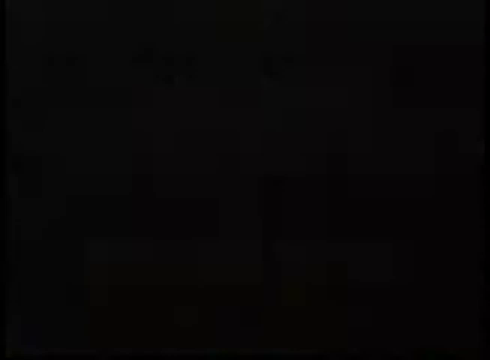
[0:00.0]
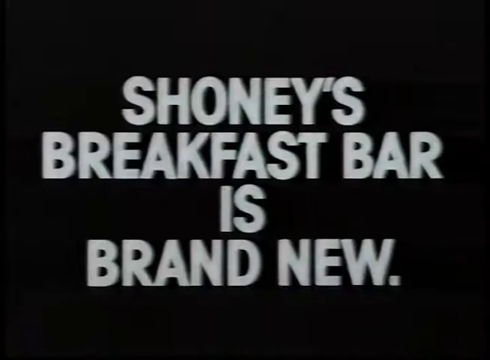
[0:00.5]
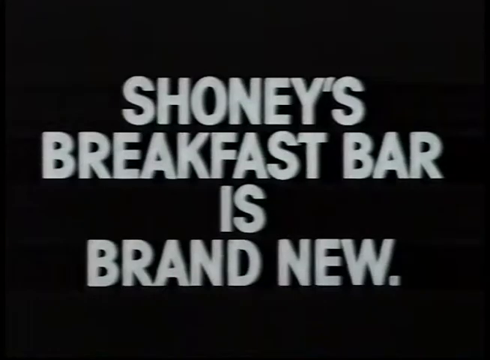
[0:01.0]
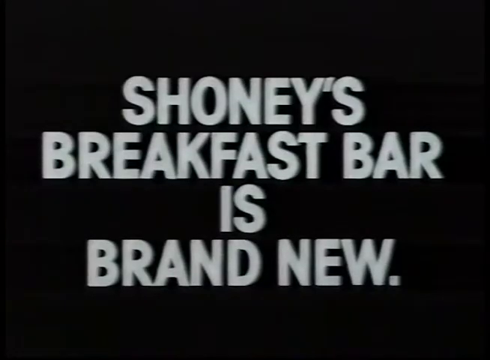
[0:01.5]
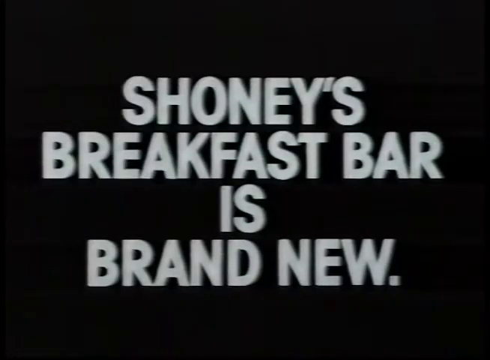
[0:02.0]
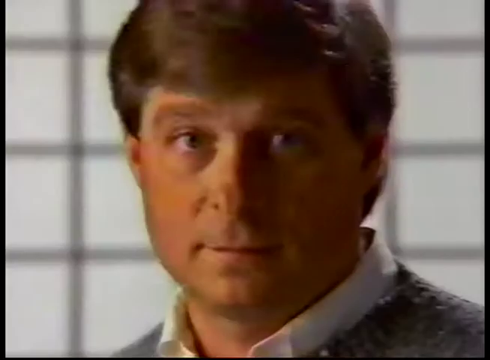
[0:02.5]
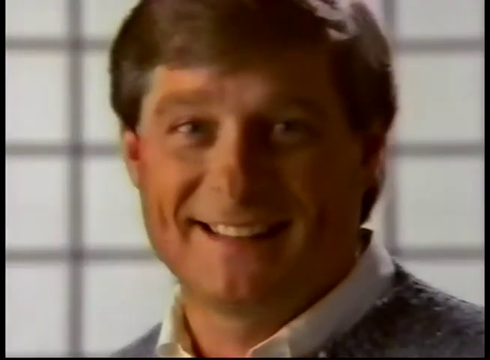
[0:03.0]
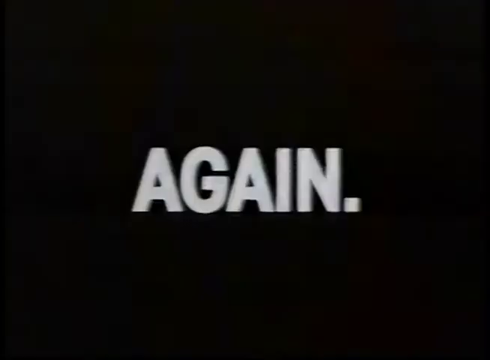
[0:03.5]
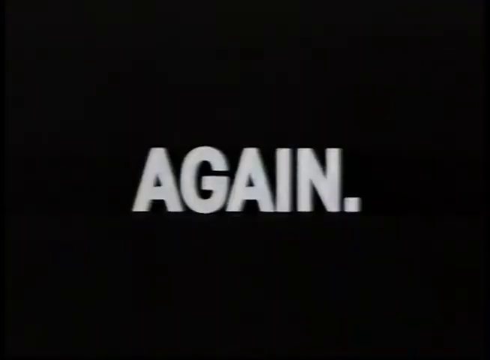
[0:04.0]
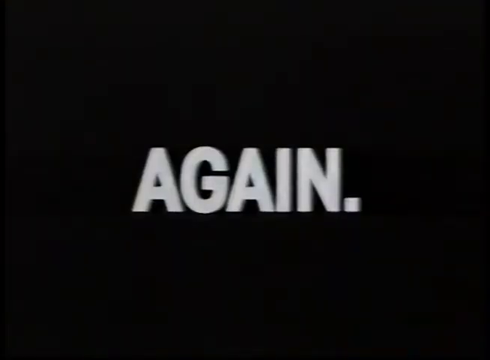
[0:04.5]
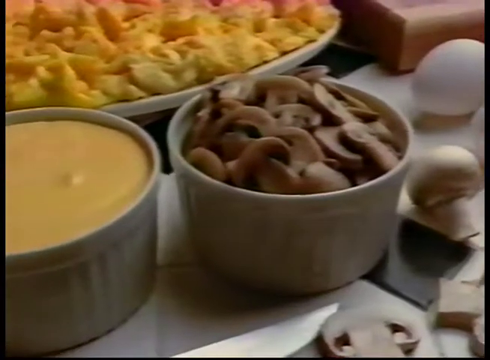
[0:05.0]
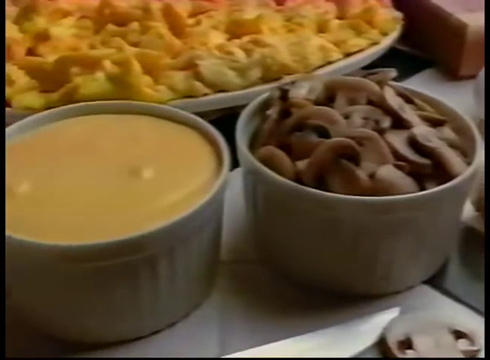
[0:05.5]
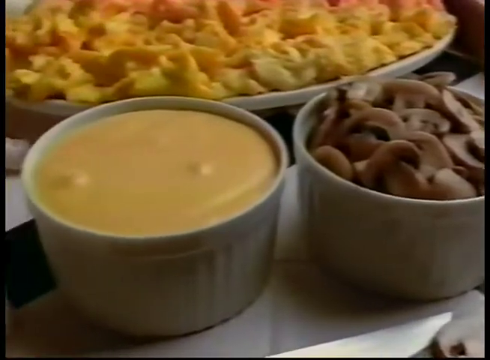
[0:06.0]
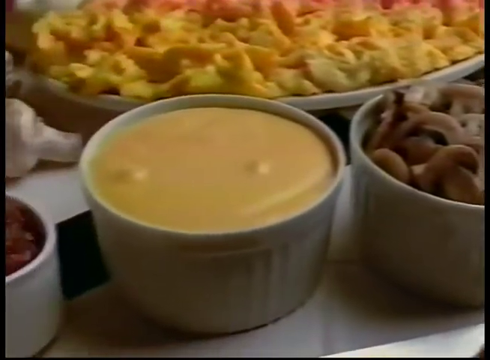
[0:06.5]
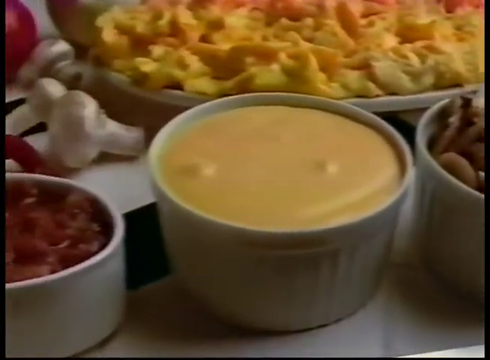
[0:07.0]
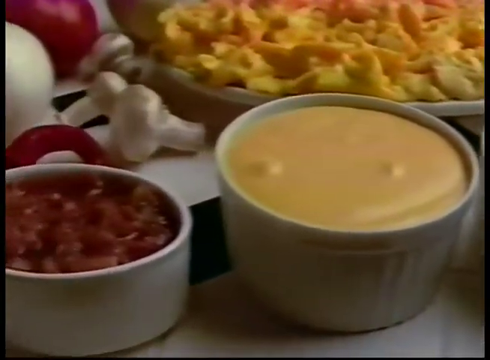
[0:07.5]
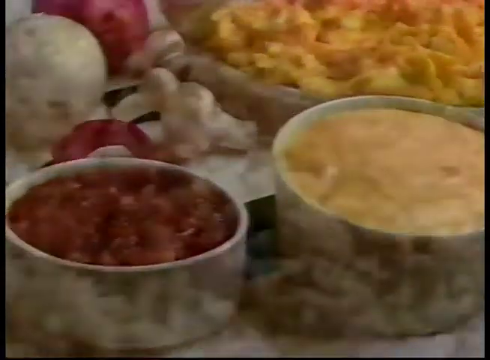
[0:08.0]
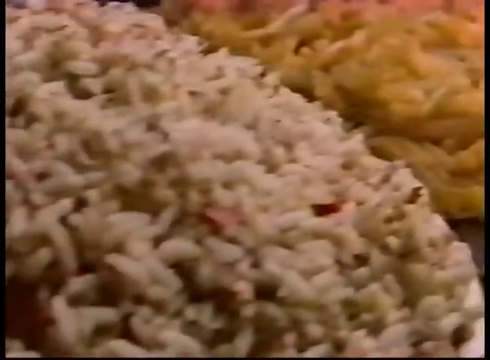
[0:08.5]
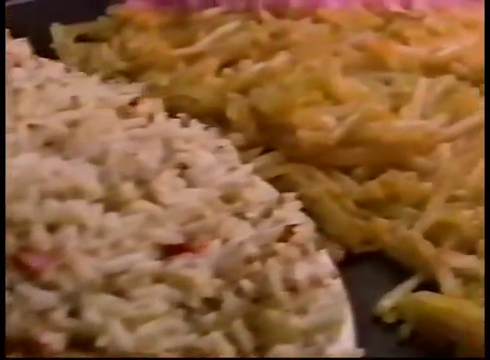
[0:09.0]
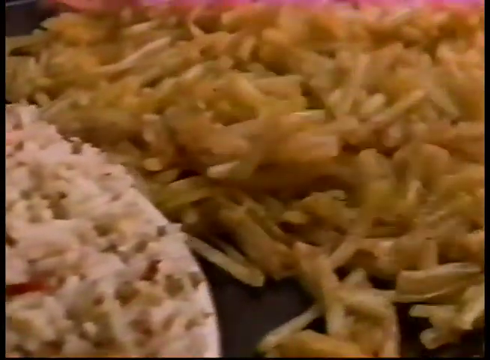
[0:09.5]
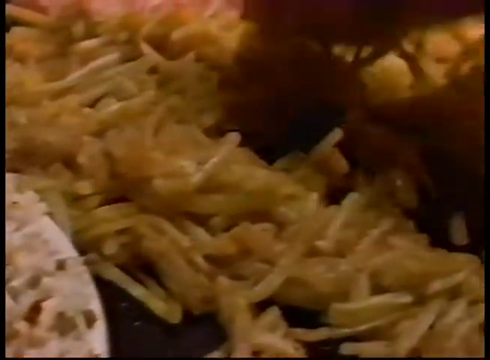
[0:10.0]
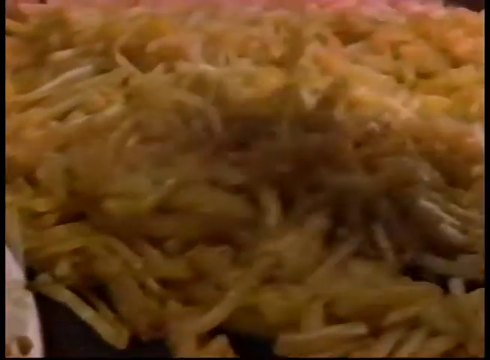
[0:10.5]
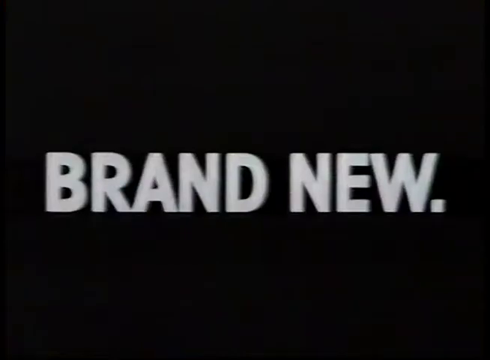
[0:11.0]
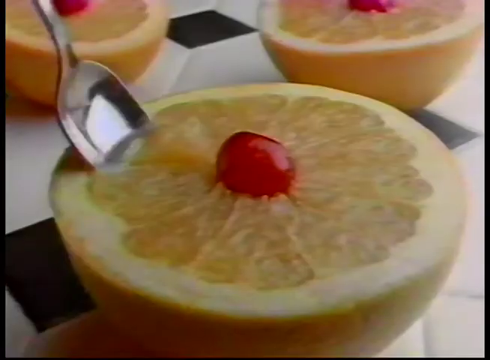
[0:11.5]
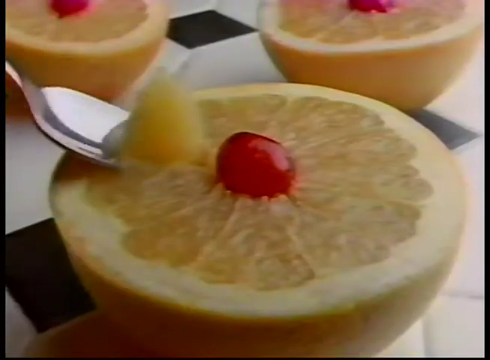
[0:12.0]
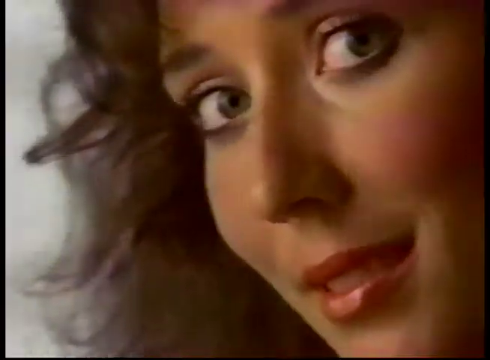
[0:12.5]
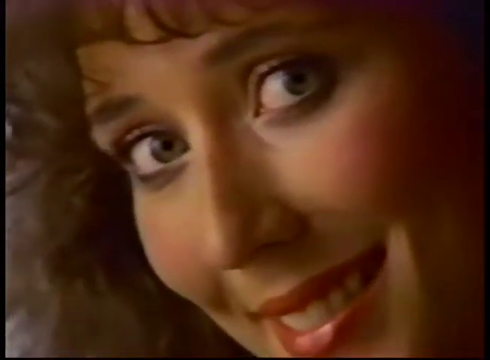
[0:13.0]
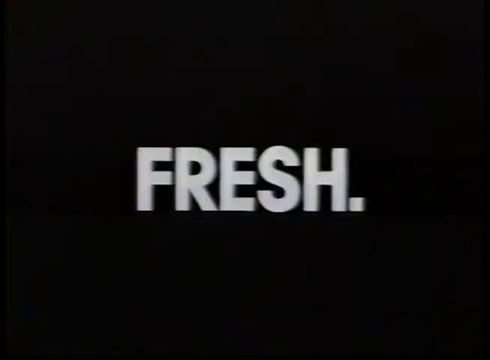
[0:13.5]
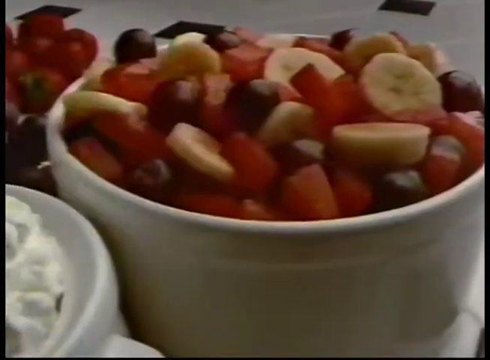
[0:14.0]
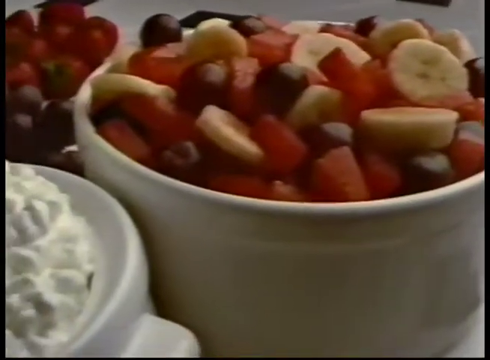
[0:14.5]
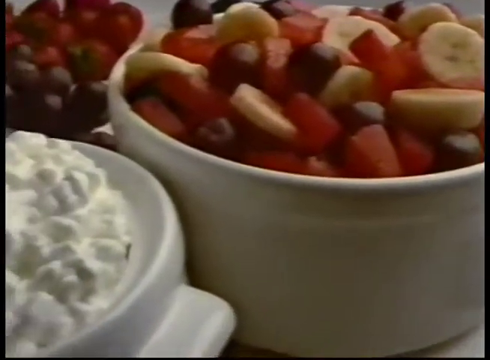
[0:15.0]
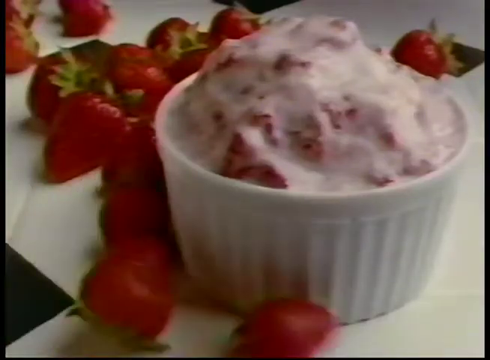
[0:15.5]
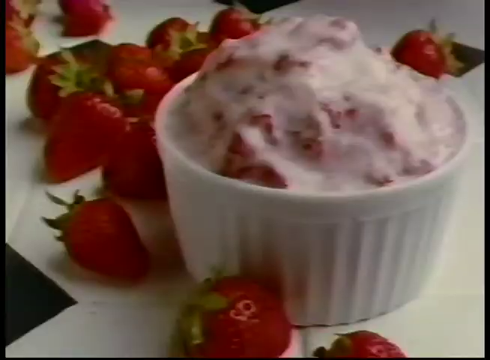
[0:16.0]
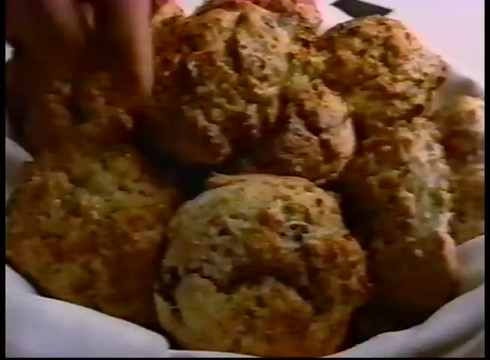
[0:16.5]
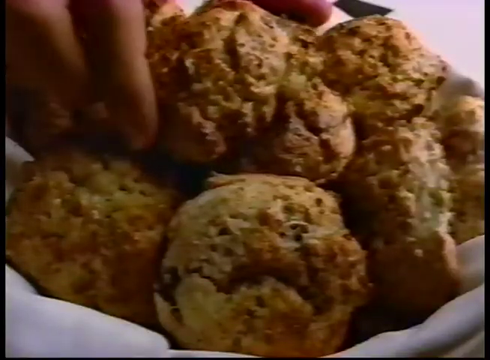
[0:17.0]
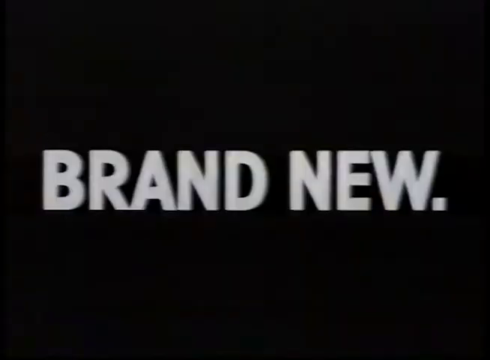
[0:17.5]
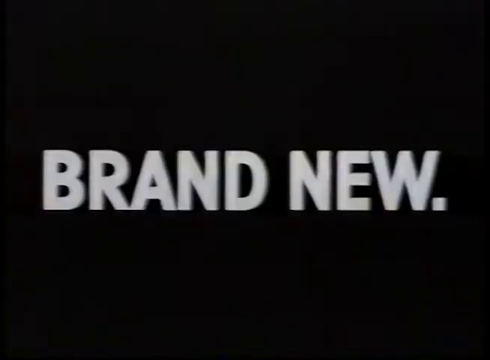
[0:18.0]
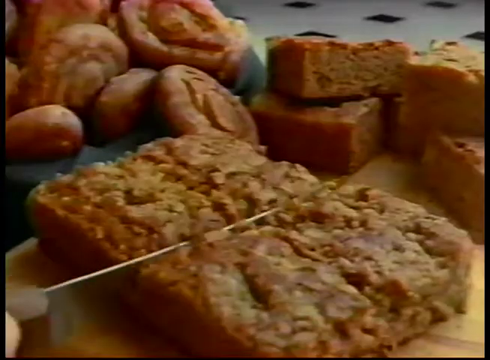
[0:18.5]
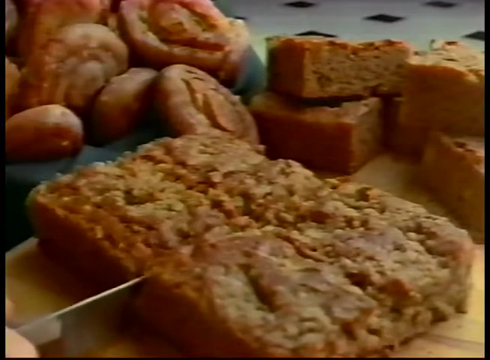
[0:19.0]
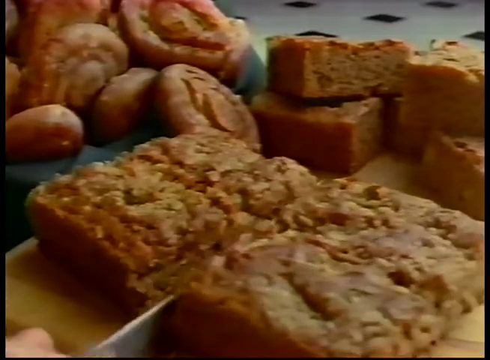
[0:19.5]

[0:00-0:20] White capital letters in the center of a black background read "Shoney's breakfast bar is brand new." This transitions to a man, probably in his forties, who seems to be grinning in a somewhat creepy manner. He wears a white dress shirt, visible underneath what may be a sweater over top. Next comes a black screen with the word "again" in white capital letters, followed by a shot of several food items. In the upper left is what looks like macaroni and cheese on a white plate. Toward the viewer in the lower left is what looks like nacho cheese in a small white bowl, with mushrooms in a small white bowl to its right. The camera pans left across them, revealing salsa in a small white bowl to the left. The scene then switches, panning right to a pile of what looks like hash browns, and a spoon comes in and flips them over.